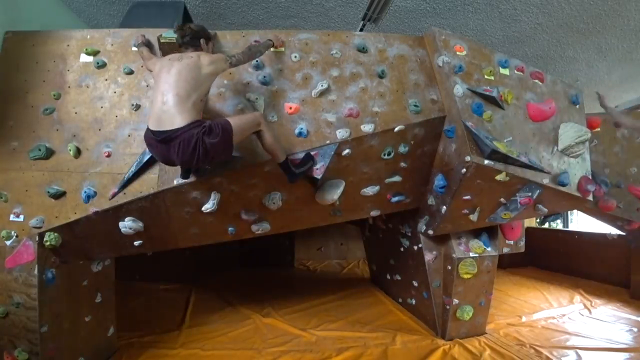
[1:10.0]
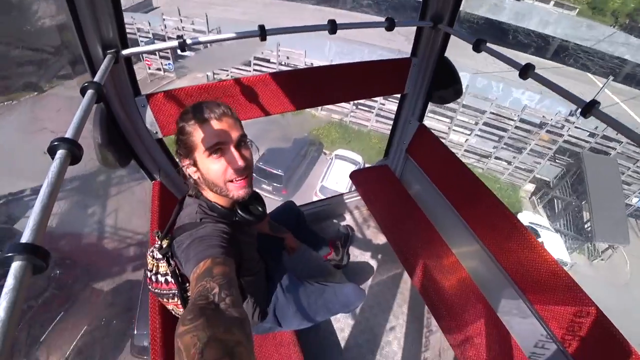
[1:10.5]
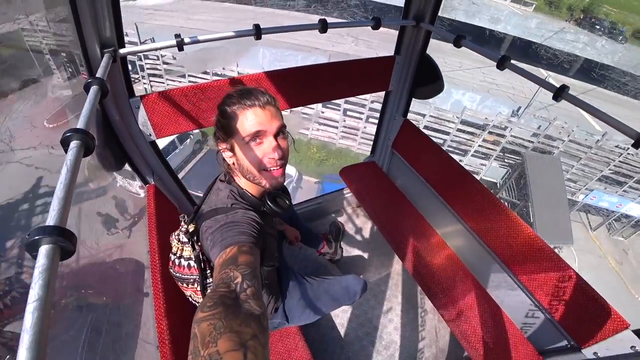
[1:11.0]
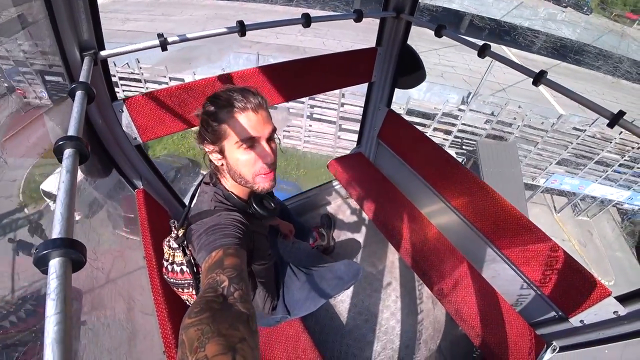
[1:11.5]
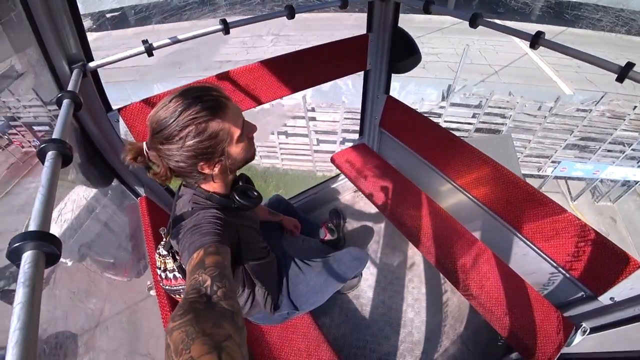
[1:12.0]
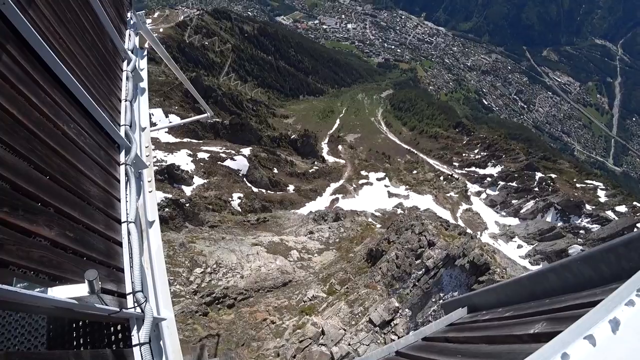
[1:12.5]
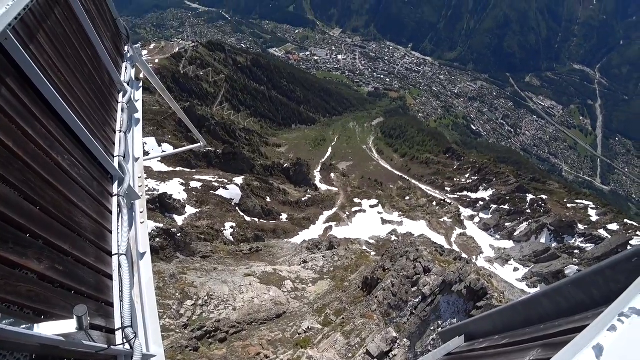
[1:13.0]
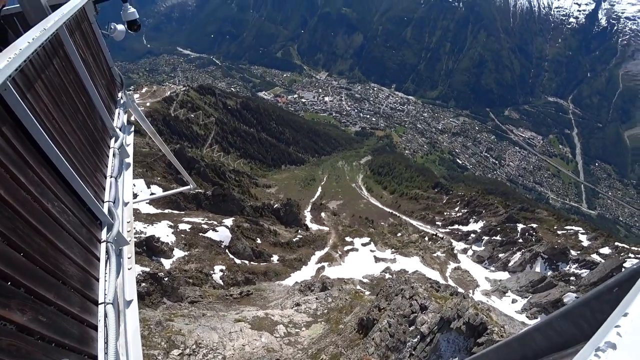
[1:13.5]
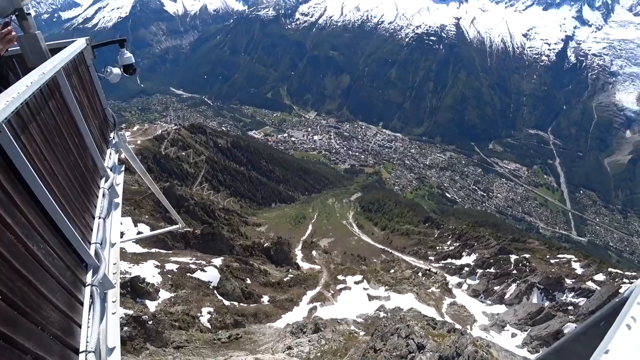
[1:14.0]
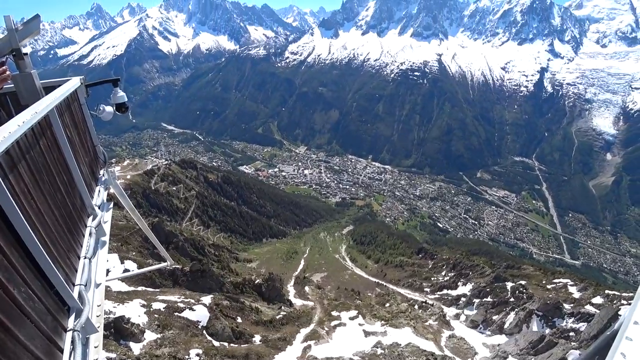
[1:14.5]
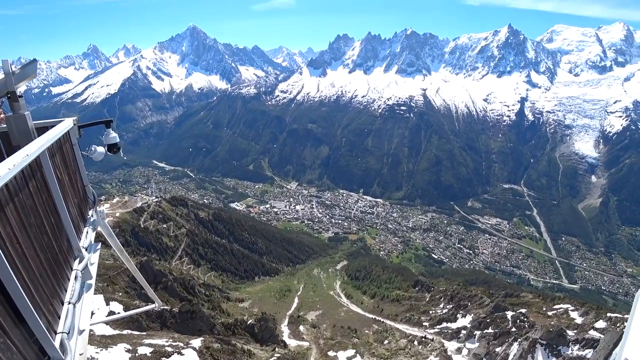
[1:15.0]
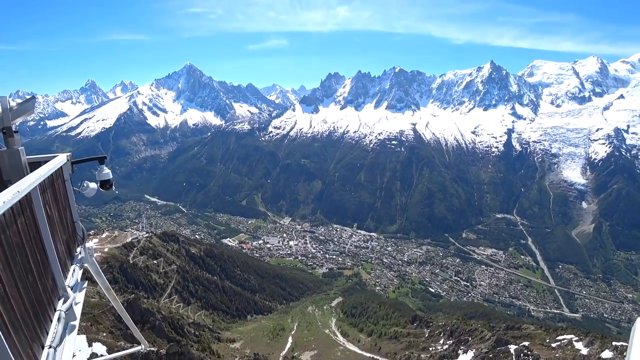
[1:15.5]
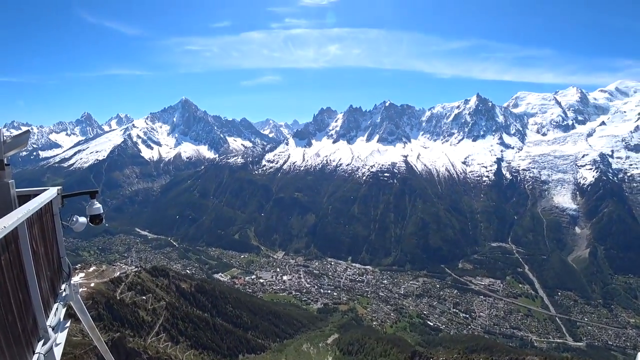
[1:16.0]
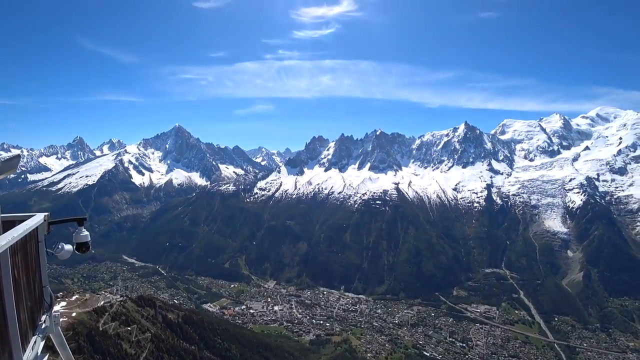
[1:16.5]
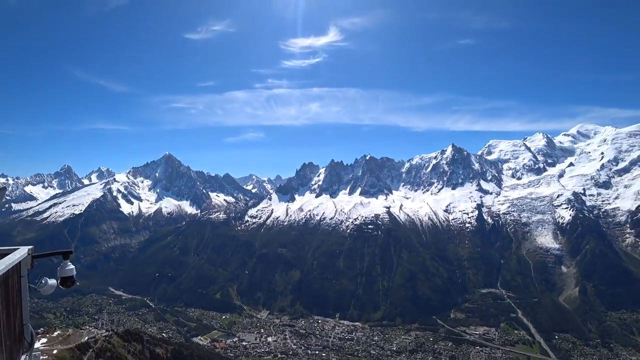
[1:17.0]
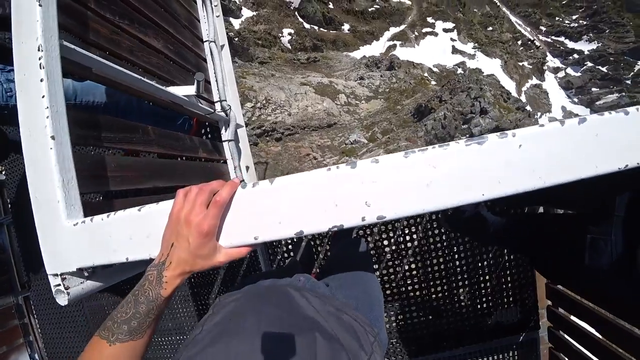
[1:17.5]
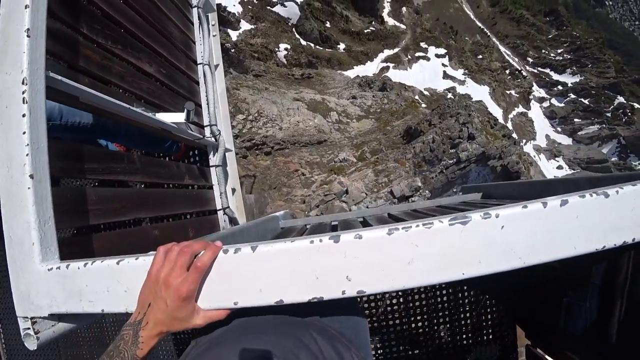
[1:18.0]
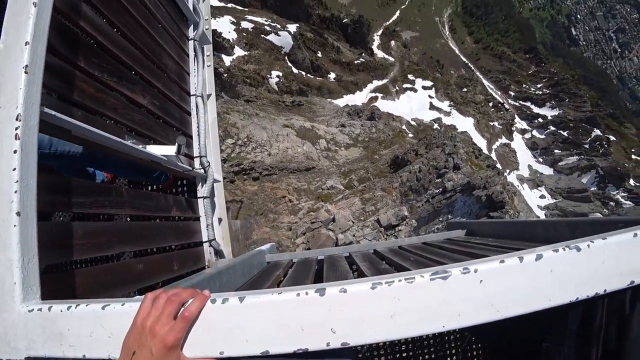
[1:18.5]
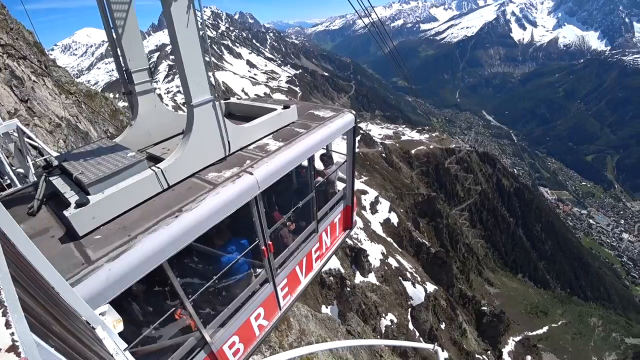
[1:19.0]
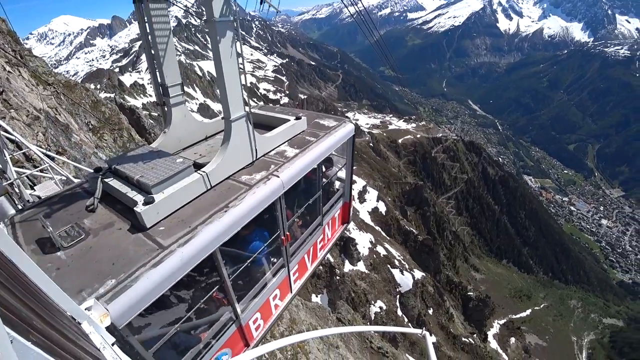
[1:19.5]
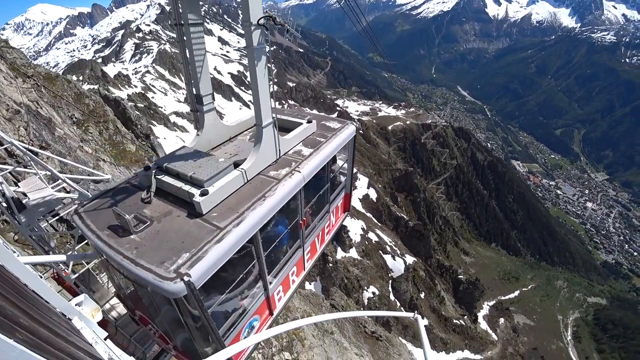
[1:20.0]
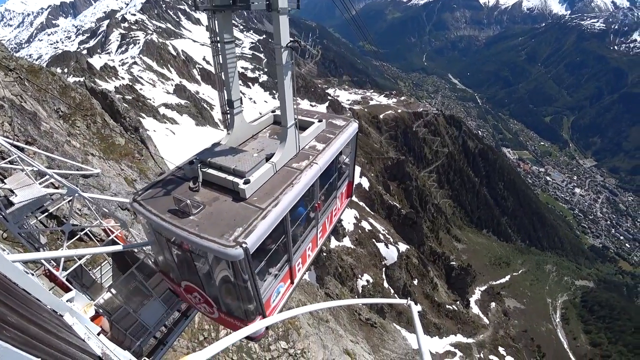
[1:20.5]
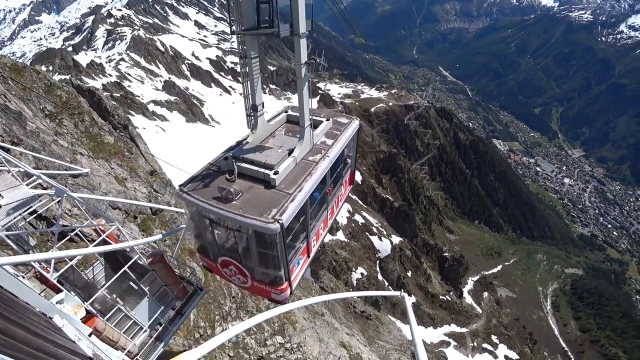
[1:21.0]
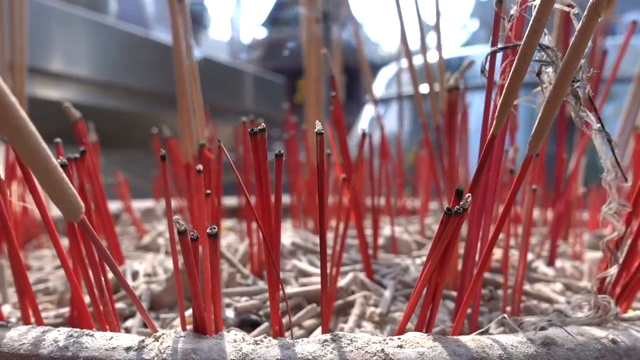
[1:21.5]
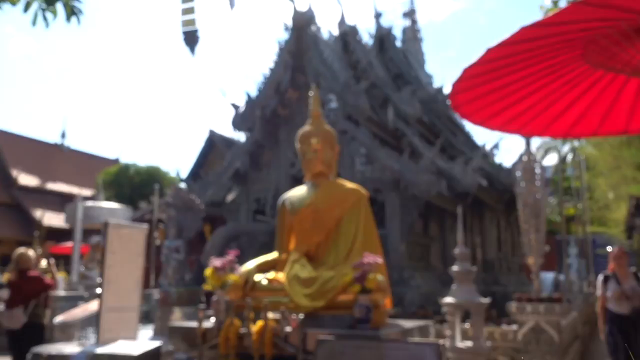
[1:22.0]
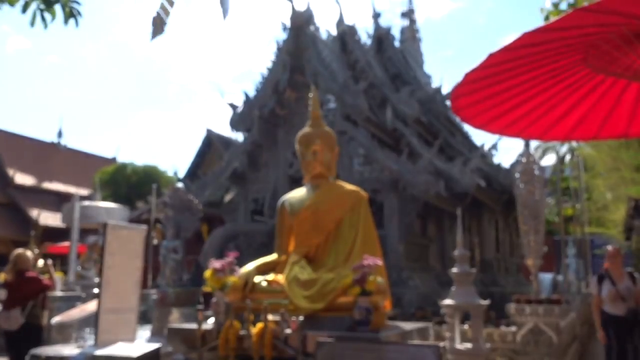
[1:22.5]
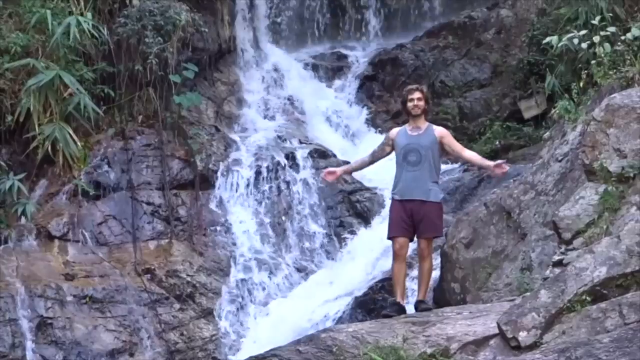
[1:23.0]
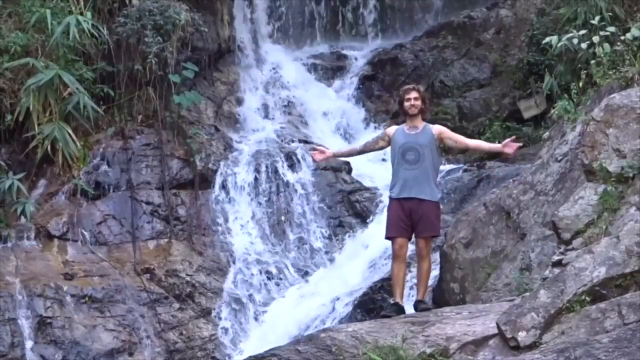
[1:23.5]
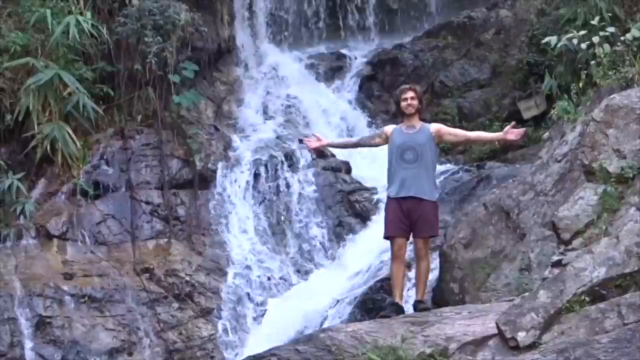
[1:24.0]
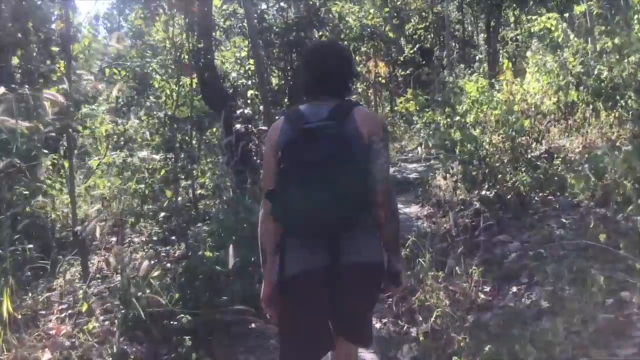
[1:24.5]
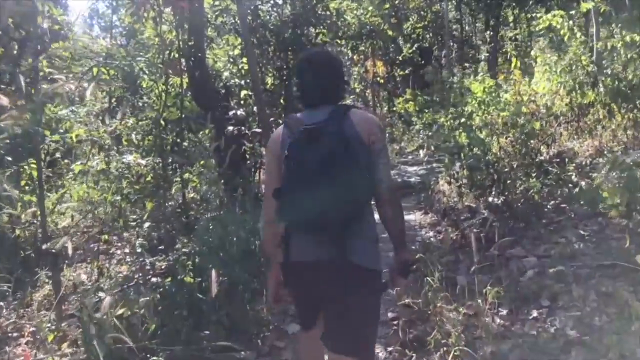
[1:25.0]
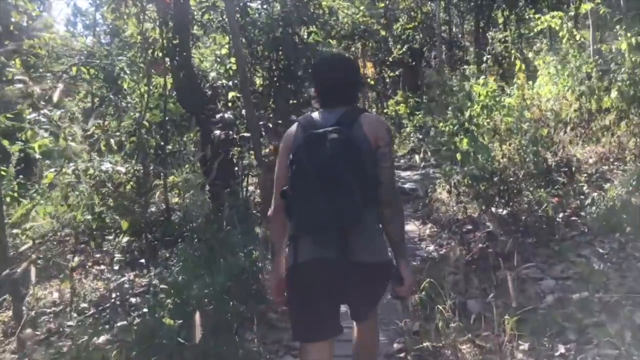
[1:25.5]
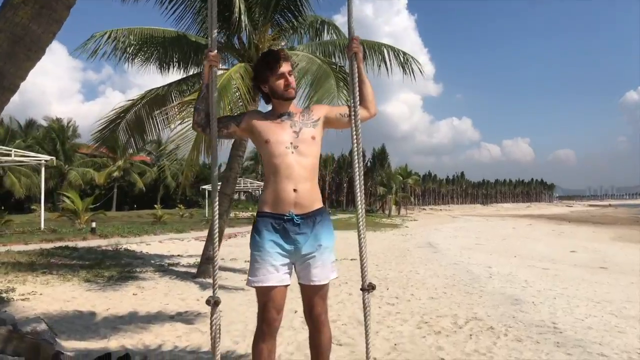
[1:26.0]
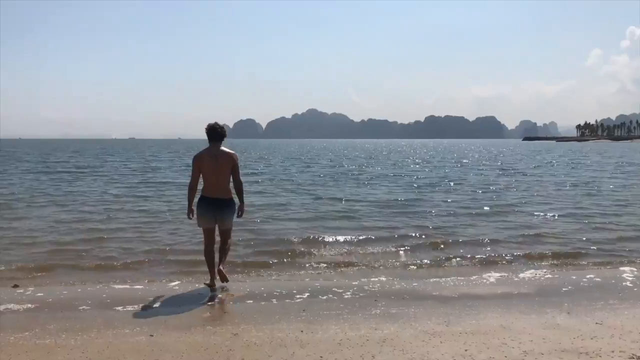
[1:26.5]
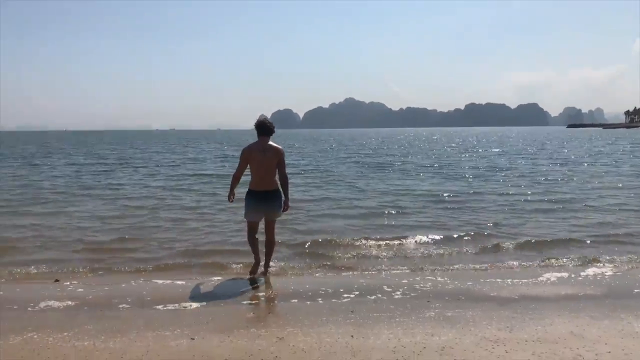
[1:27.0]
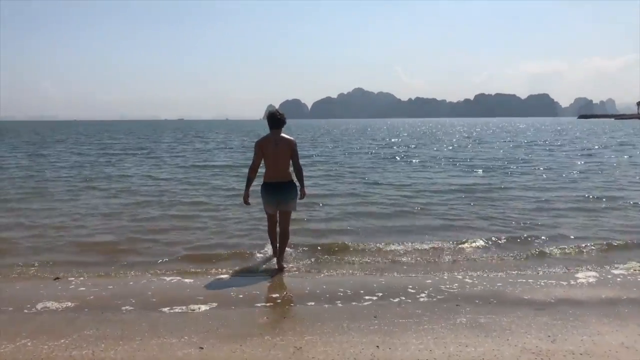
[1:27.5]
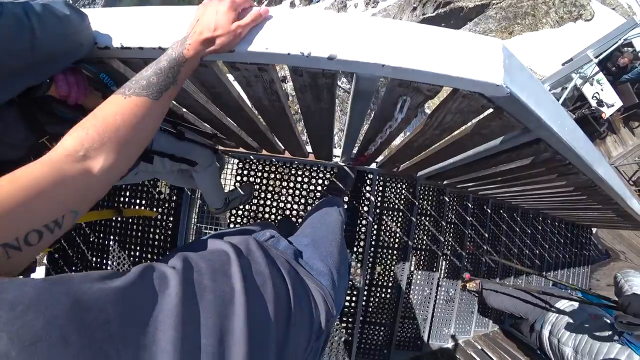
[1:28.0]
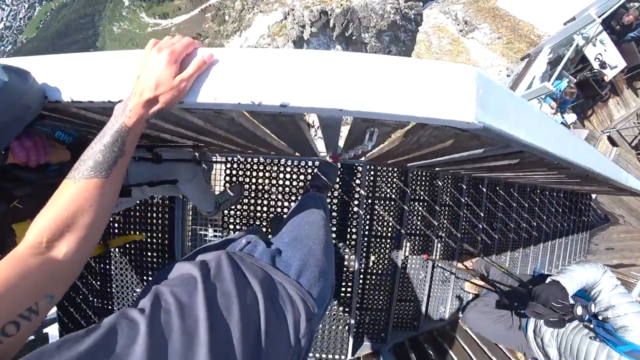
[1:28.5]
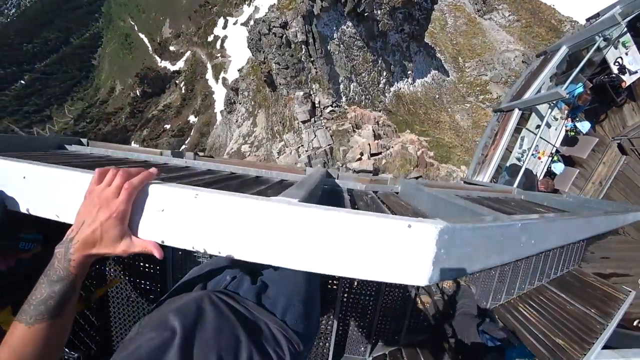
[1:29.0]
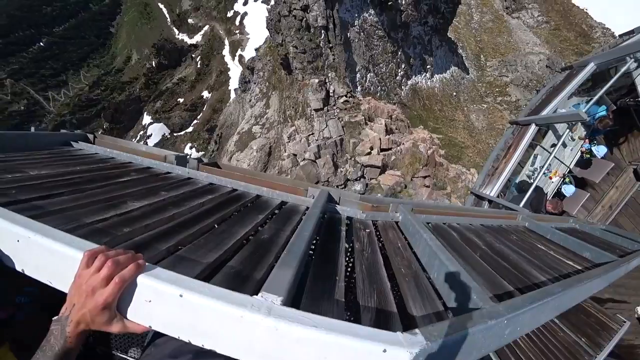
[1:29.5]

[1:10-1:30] A person rock climbs indoors on a brown rock climbing structure with colorful stones attached to it, climbing sideways. A man with his hair in a ponytail rides in what looks like an outdoor elevator. Below is a hilly terrain with what looks like some melted snow among little rocks. The camera pans forward to show lots of snow-covered mountain peaks in the distance against a blue sky with some white clouds. Again the view is from the viewpoint of a person high above. An overhead trolley that carries people travels along, viewed from above. A large Buddhist temple has a giant statue in front of it. A man in a blue tank top and brown shorts stands with his arms stretched open wide in front of a waterfall, his back turned to it. From behind, a man hikes in the woods with a backpack. A man in shorts on a beach walks into the water.